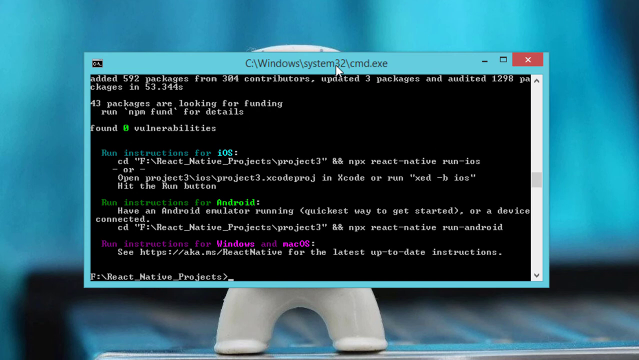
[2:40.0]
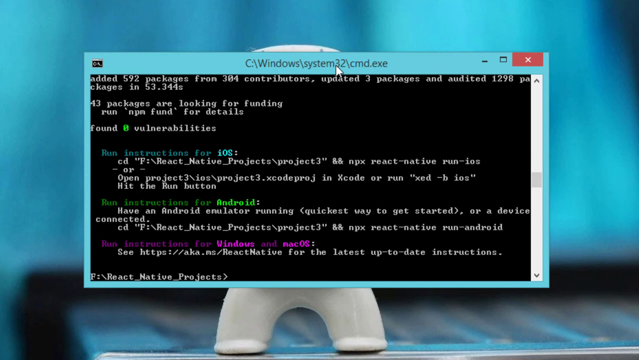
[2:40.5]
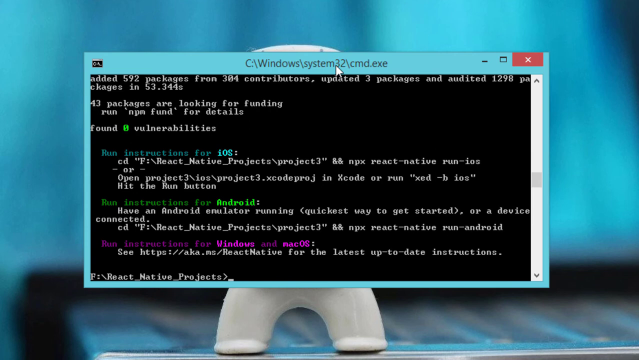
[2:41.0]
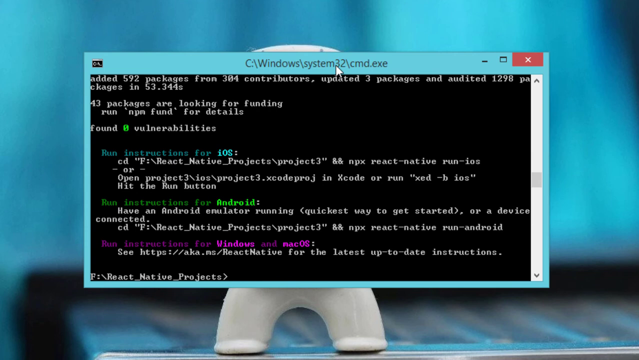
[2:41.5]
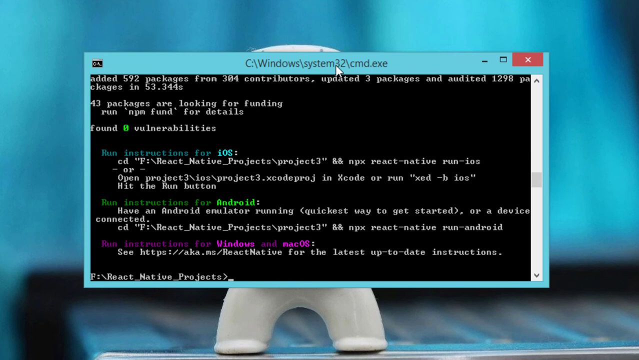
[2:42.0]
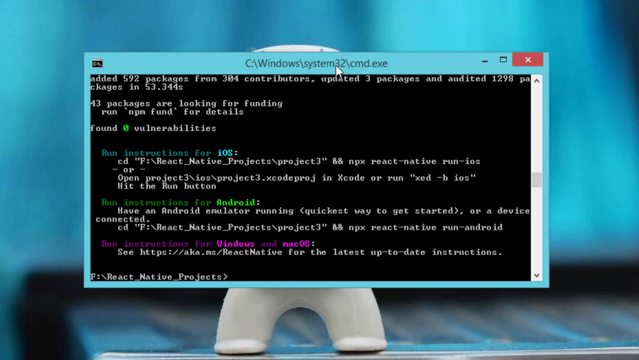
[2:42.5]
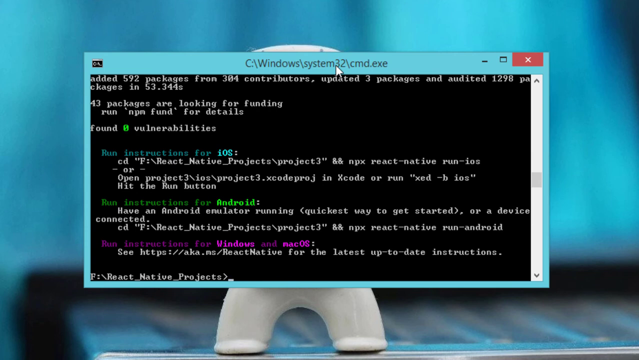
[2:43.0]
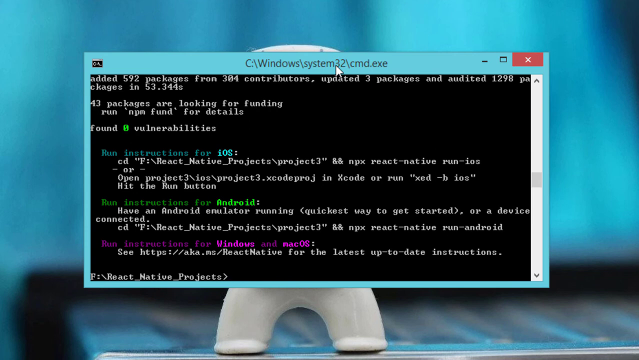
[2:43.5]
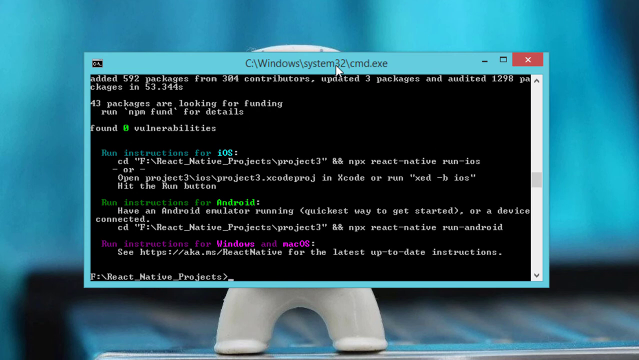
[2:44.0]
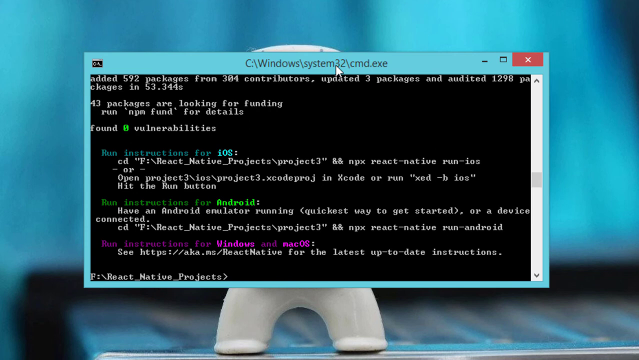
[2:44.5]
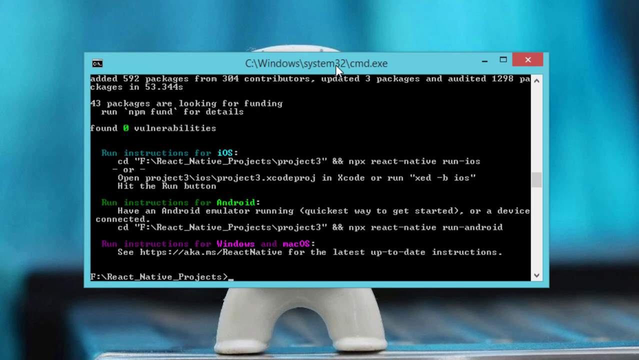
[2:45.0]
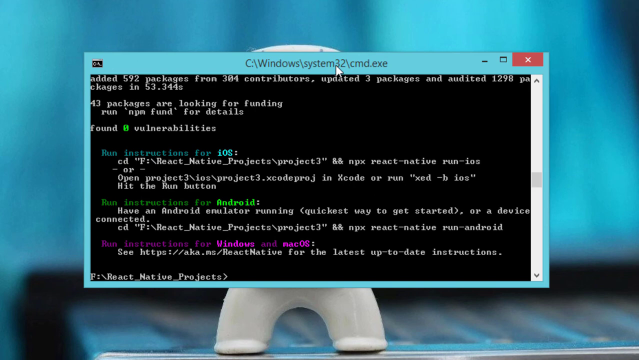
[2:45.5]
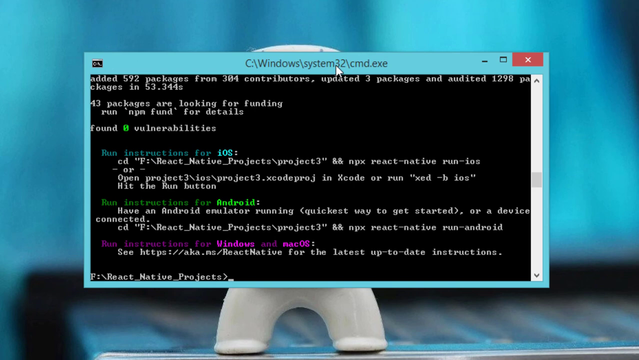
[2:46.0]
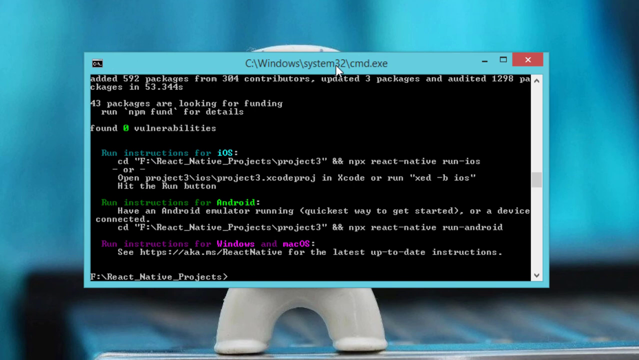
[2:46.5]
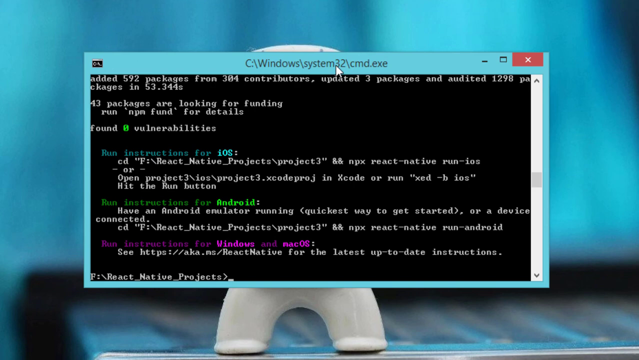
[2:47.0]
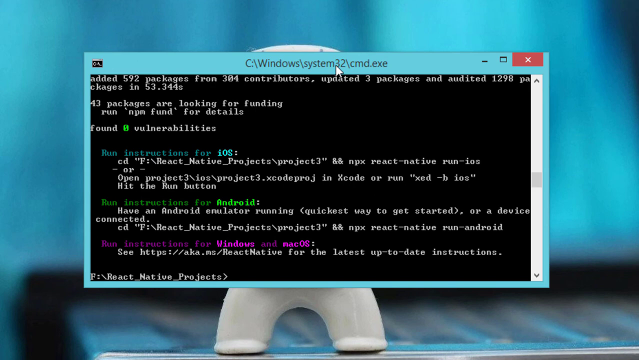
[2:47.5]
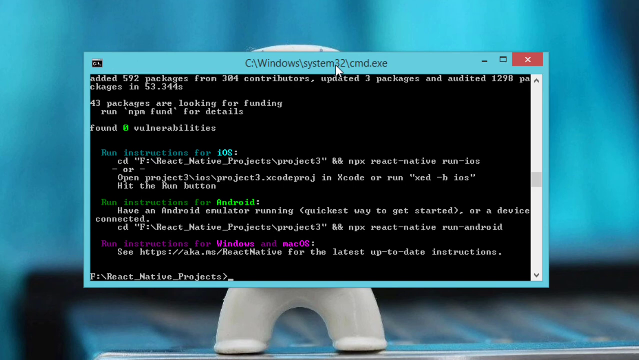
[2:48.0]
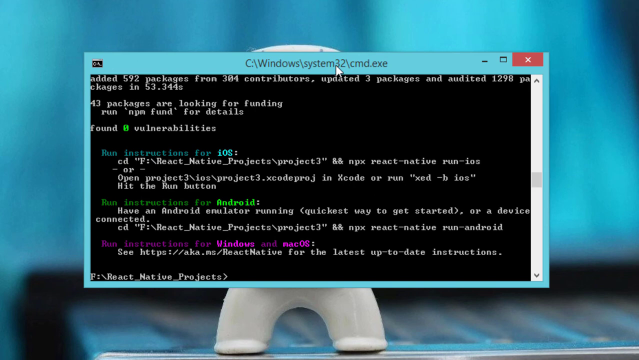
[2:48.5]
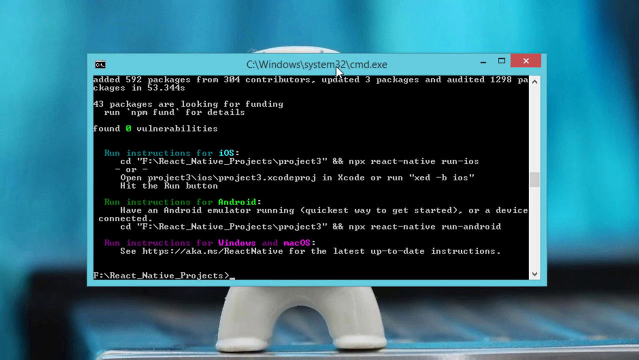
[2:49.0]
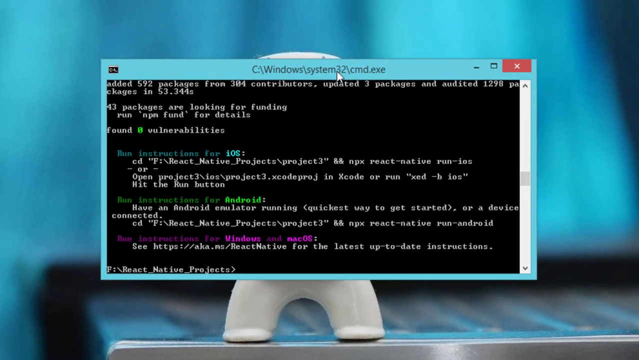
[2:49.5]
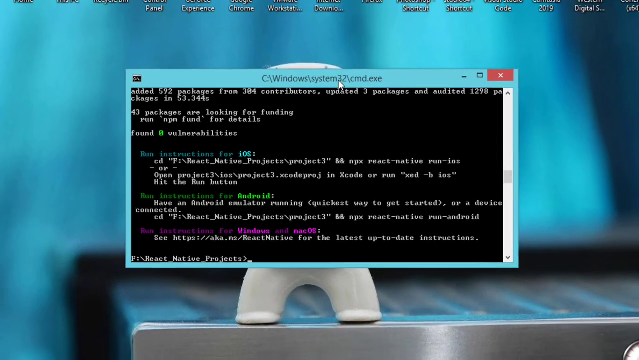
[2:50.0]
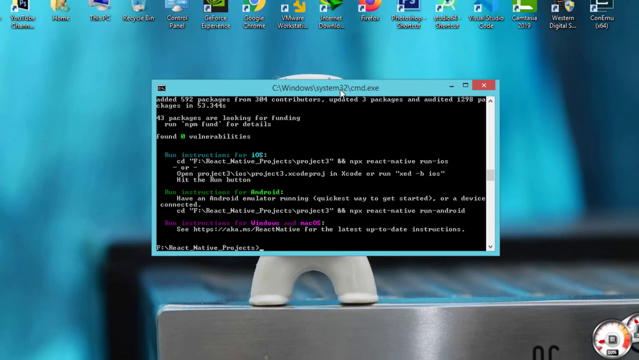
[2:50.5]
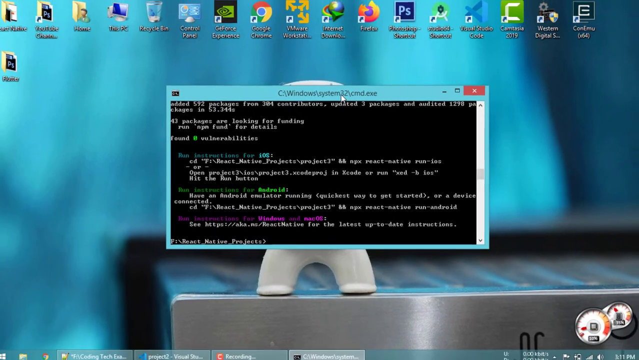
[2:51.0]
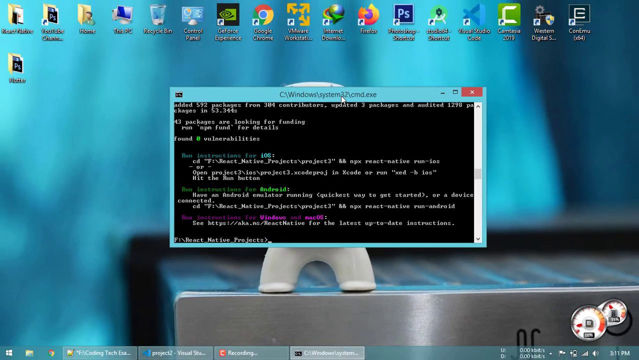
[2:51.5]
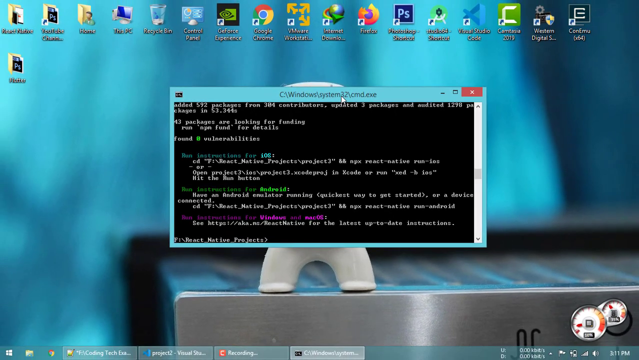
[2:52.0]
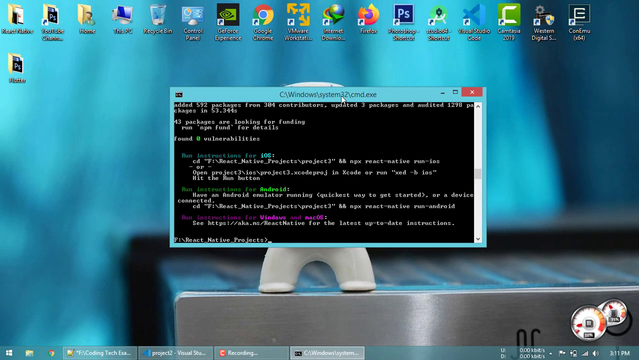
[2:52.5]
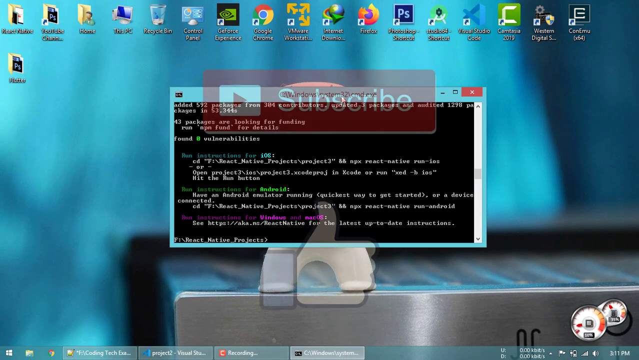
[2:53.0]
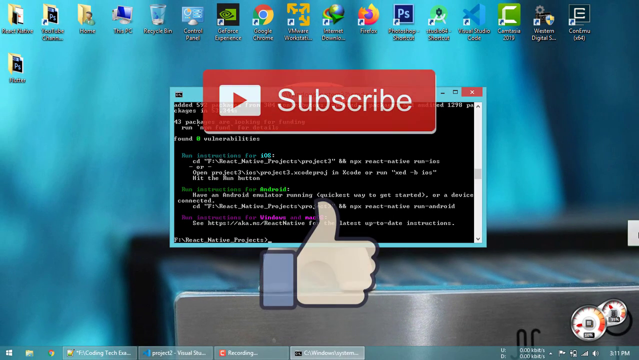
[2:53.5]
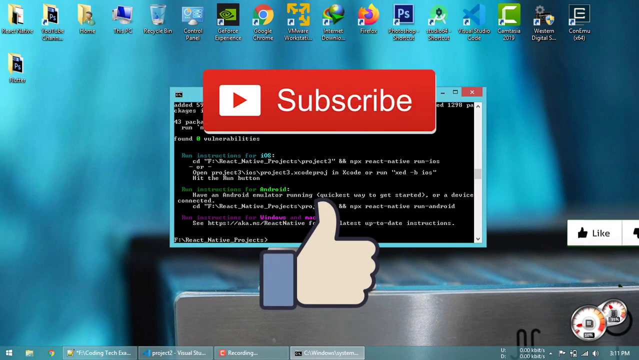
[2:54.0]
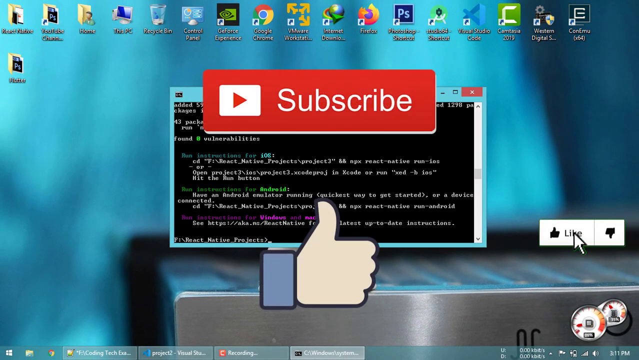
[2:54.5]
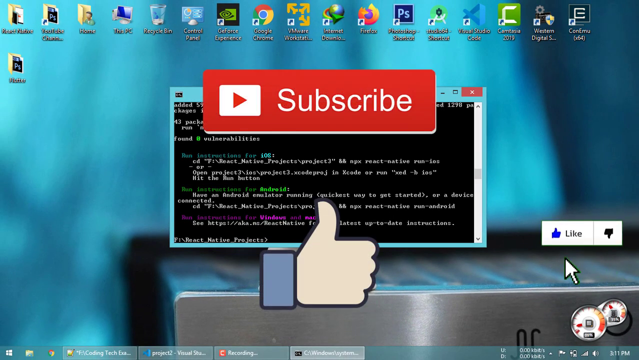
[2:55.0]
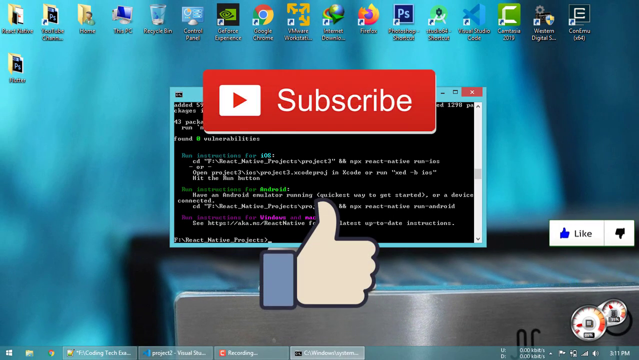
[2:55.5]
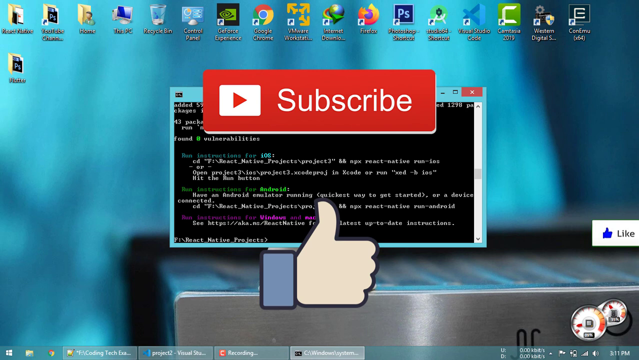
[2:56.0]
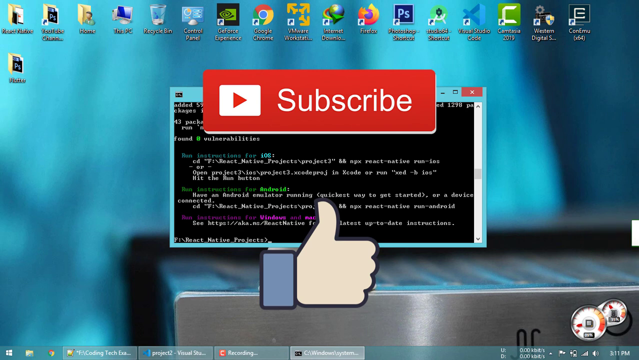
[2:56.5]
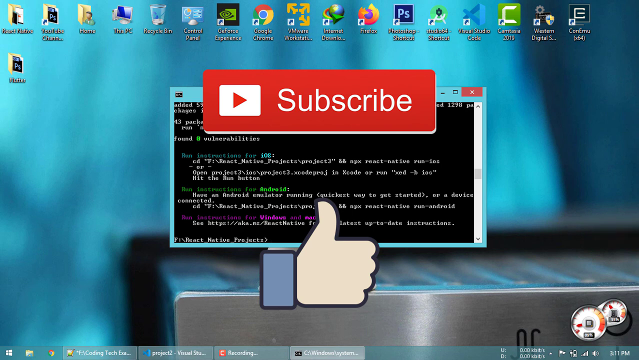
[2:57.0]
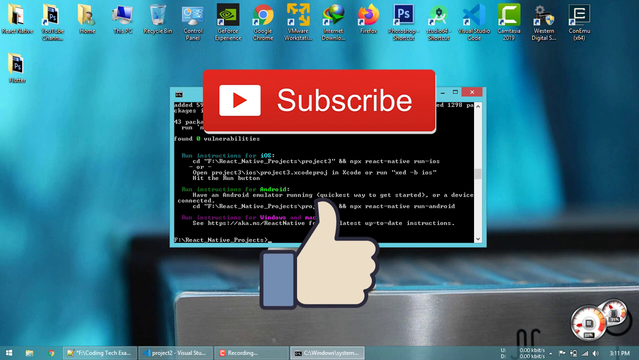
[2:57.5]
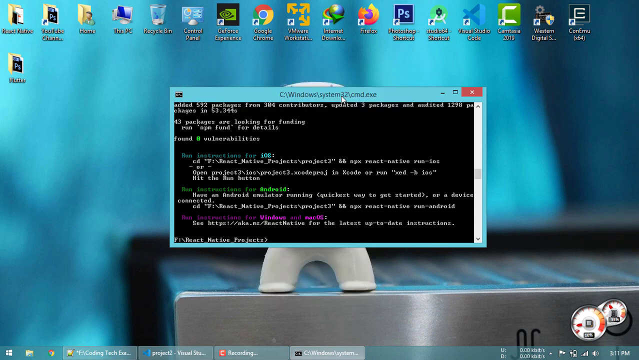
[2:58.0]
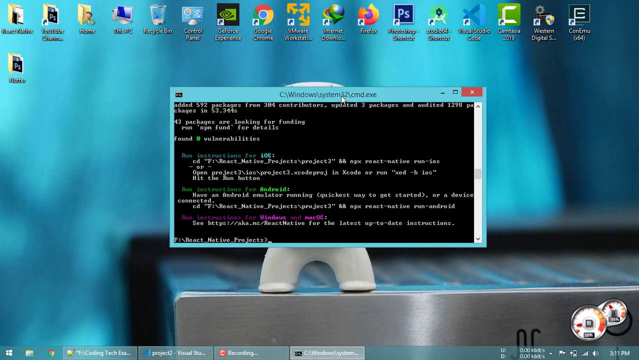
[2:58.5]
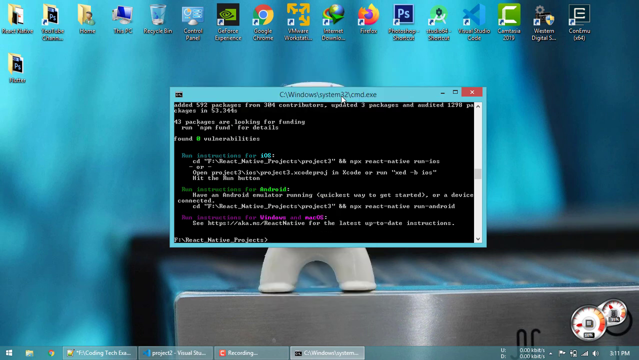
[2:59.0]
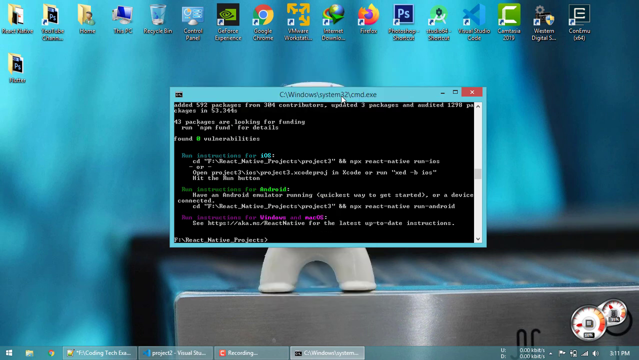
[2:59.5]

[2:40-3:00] The command prompt window shows final setup instructions for running the React Native project, stating that to test it on iOS or Android an Android emulator or a physical device connected to the computer is needed. The text in the prompt uses different colors. An overlay appears on the screen with a YouTube logo and subscribe and follow icons.